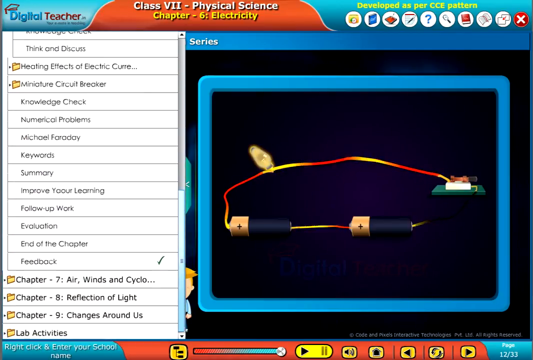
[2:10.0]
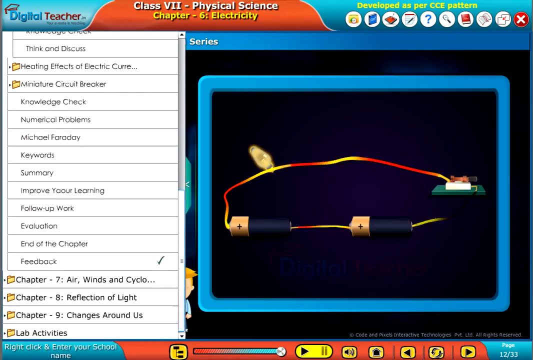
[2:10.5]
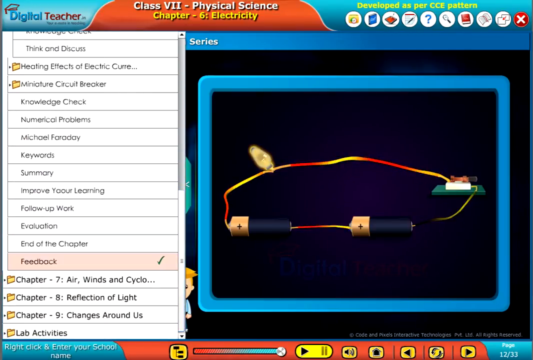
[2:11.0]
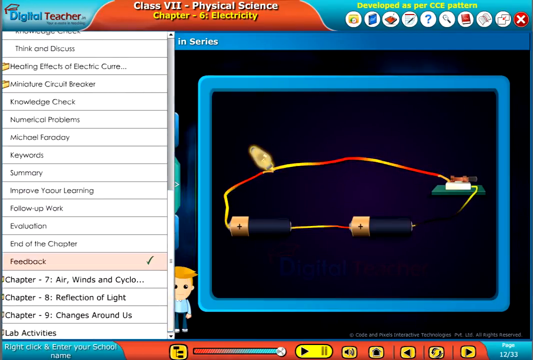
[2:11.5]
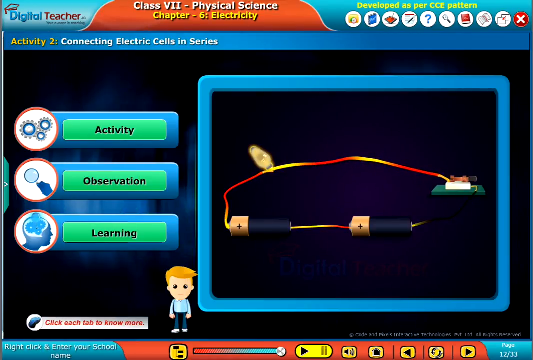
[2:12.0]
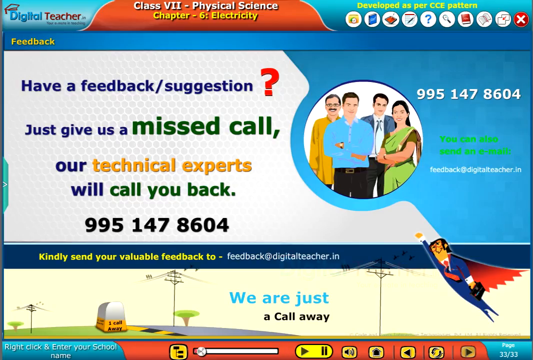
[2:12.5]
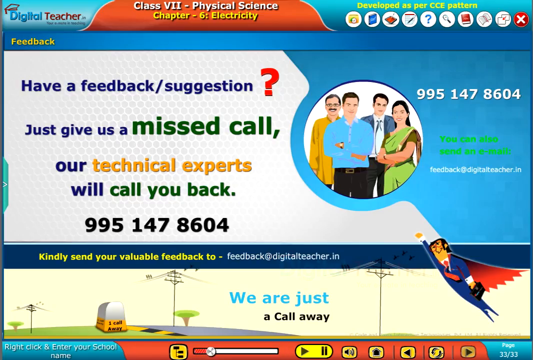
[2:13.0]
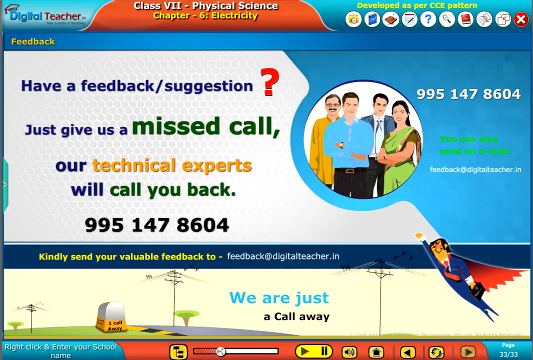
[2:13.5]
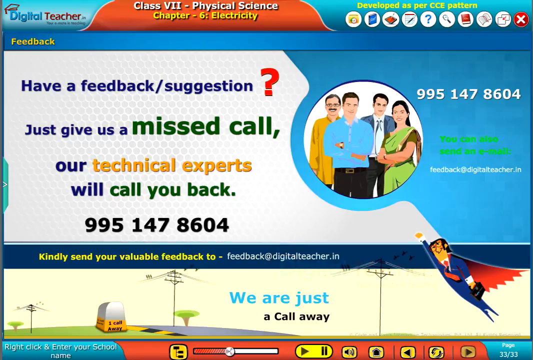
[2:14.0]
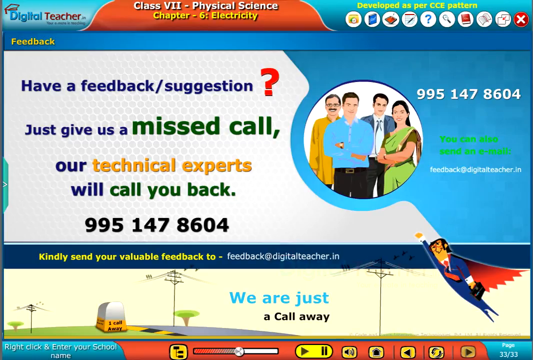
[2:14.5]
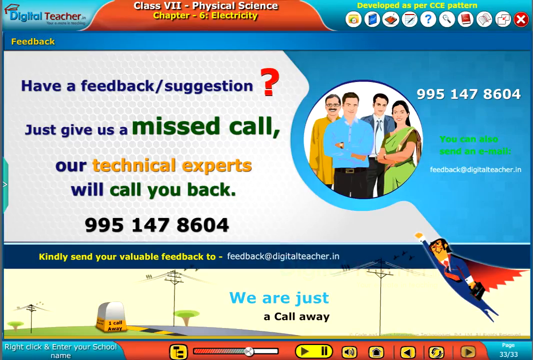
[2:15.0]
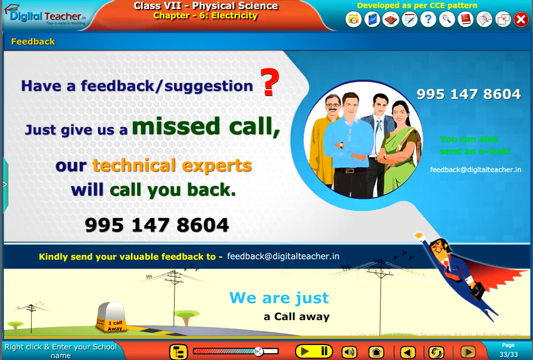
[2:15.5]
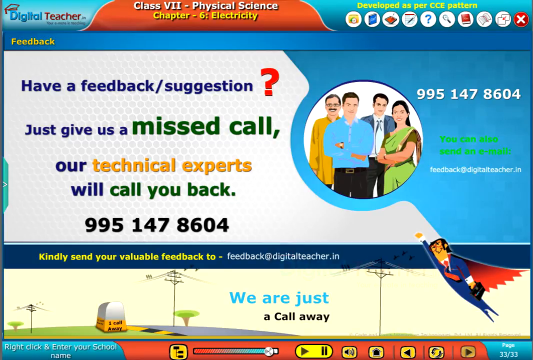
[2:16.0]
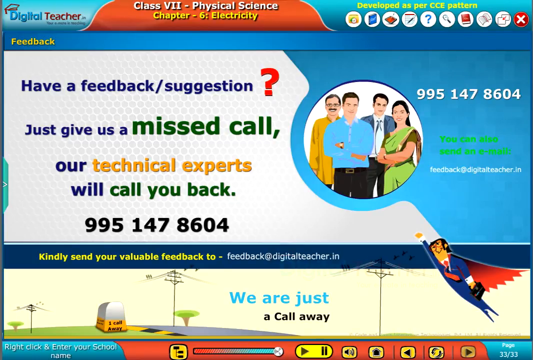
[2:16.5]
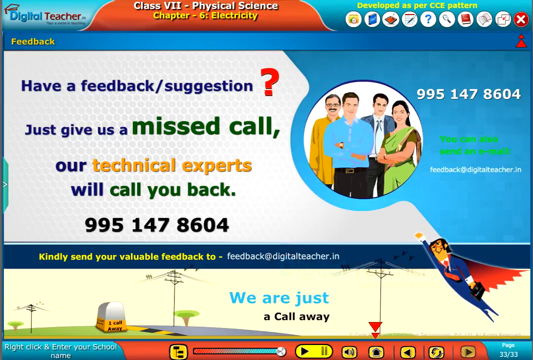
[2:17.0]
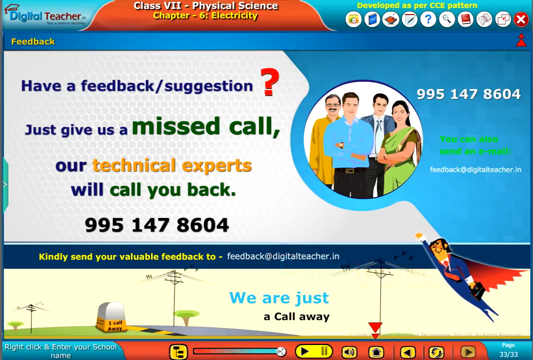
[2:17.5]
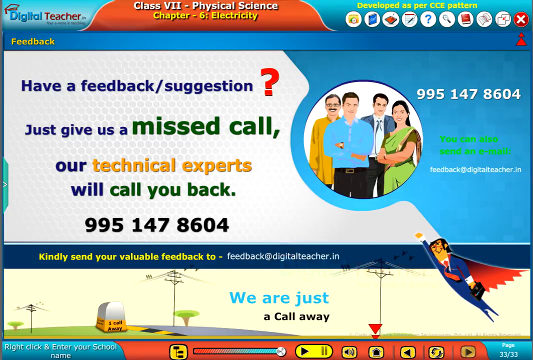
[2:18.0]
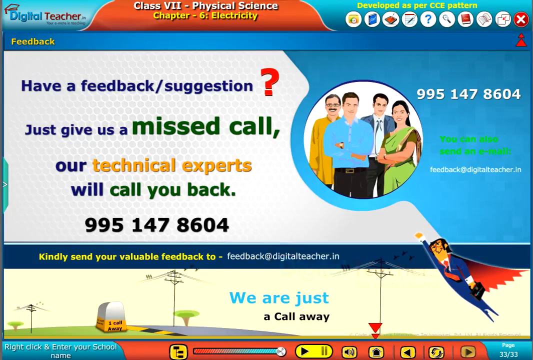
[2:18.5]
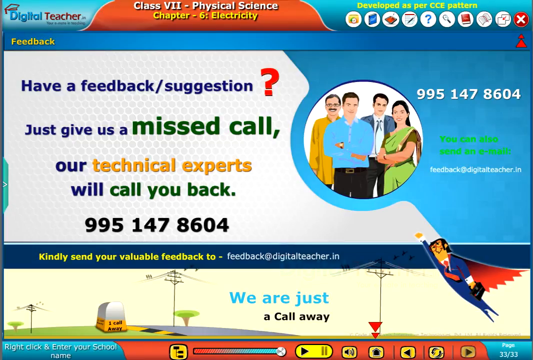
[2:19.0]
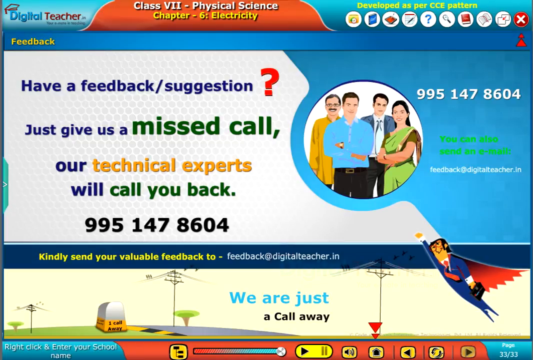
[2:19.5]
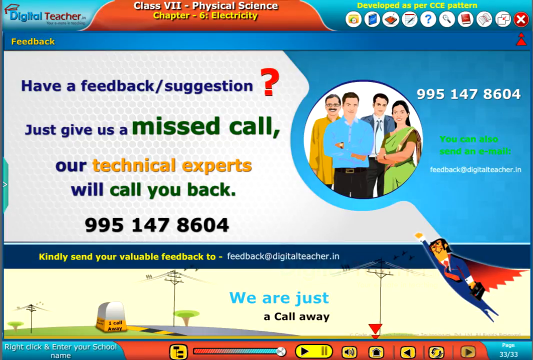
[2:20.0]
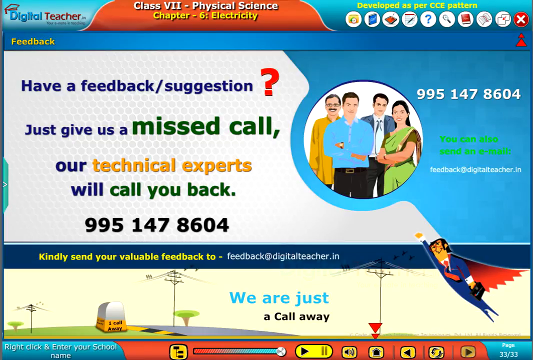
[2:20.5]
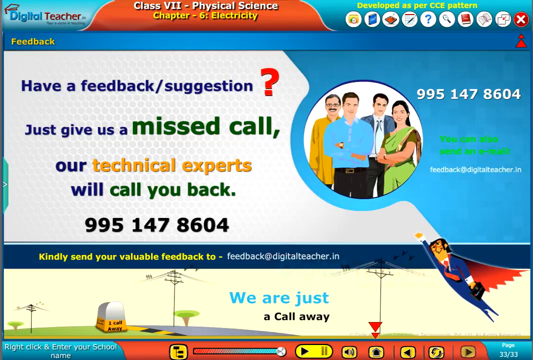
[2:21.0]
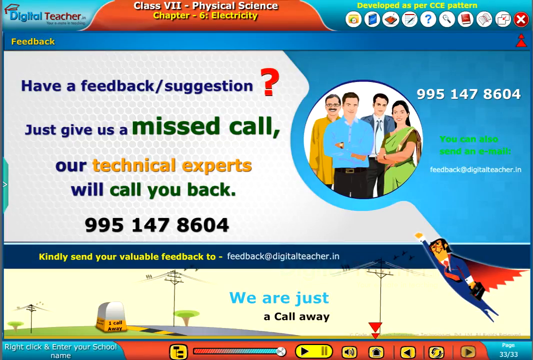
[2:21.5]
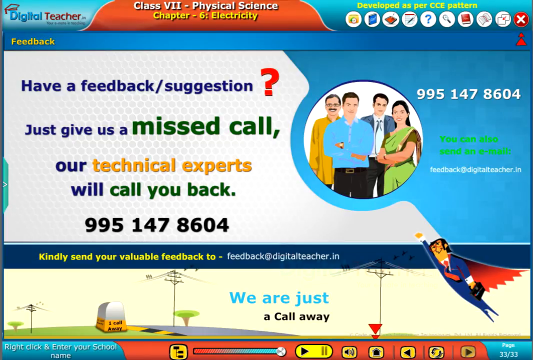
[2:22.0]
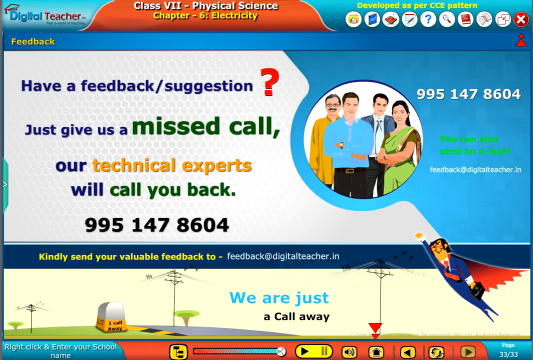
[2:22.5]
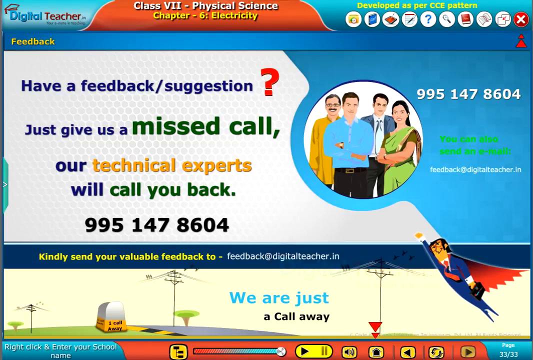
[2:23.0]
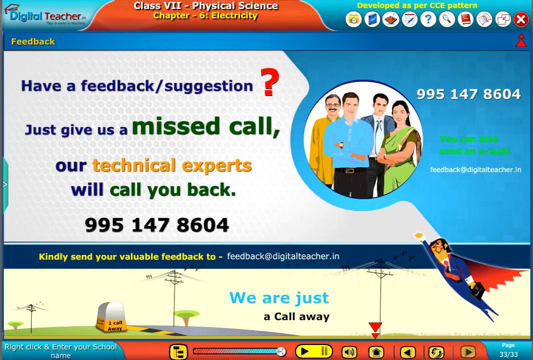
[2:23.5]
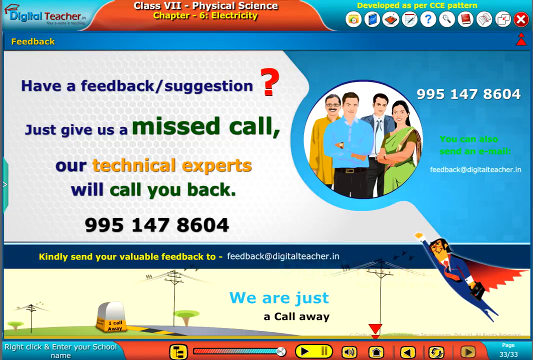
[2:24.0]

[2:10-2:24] On the menu with electricity highlighted, the view scrolls down a little, showing "chapter 7, air, winds, and cyclones" and "chapter 8, reflections of light". The video then goes to what seems like a finishing screen, almost like one in a sales deck rather than a program. On a white cutout it says "have a feedback suggestion" and "just give us a missed call our technical experts will call you back": the text is blue, with "missed call" in green, "our" in blue, "technical experts" in yellow, "will" in blue, and "call you back" in green, followed by the number 995-147-8604. To the right, on a blue cutout in the same banner, are a group of four cartoonish people, the same phone number and some green writing. The people are a man in a yellow shirt with a mustache, a man in a blue shirt with black hair, a man in a blue suit, and a woman in a sari. Beneath that it says "we are just a call away", with a cartoonish Superman-type figure.